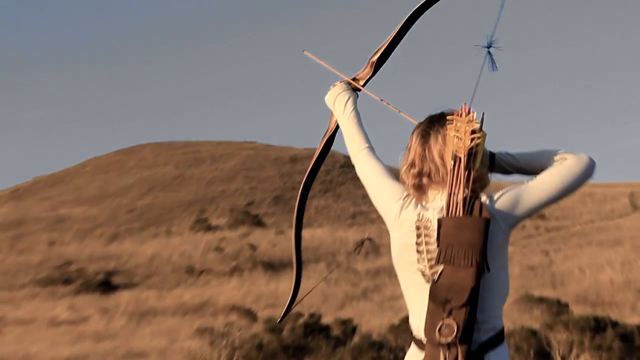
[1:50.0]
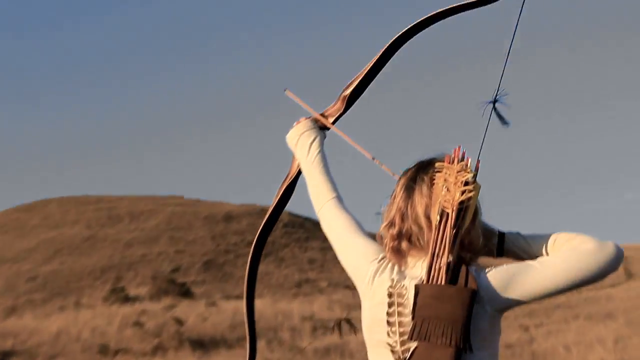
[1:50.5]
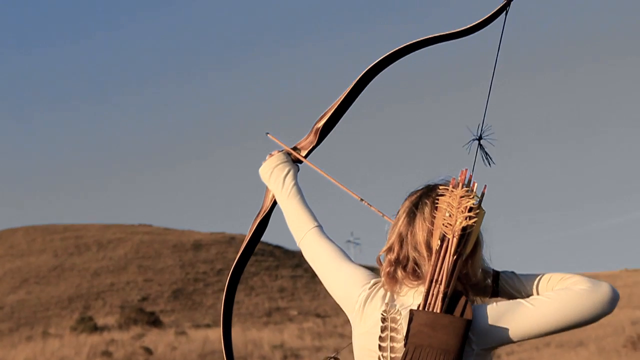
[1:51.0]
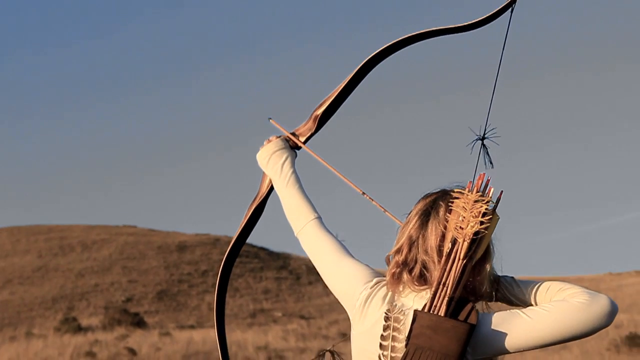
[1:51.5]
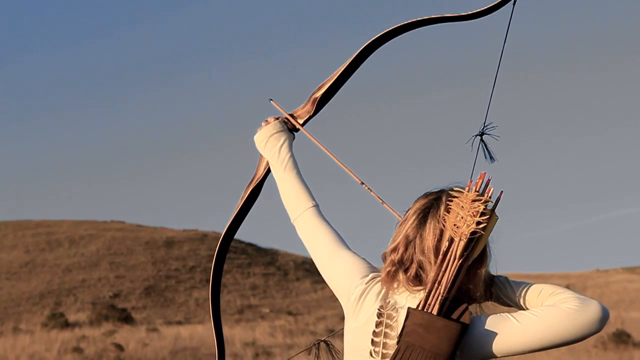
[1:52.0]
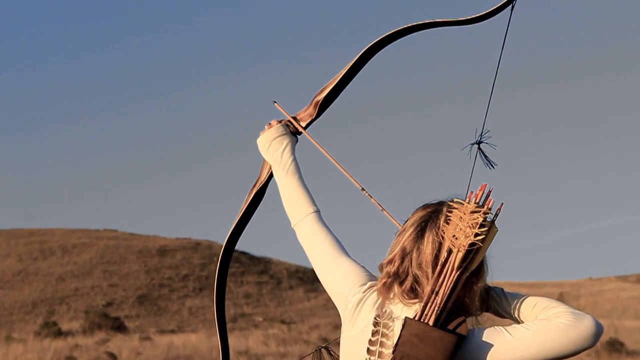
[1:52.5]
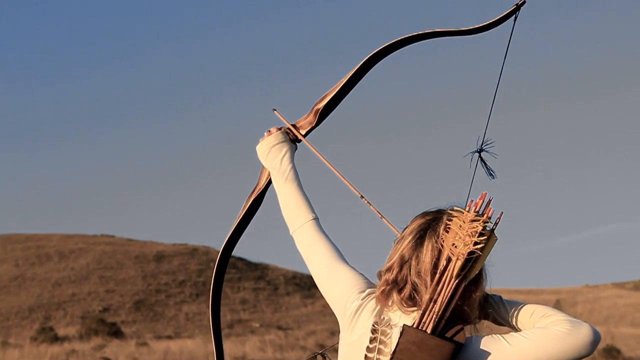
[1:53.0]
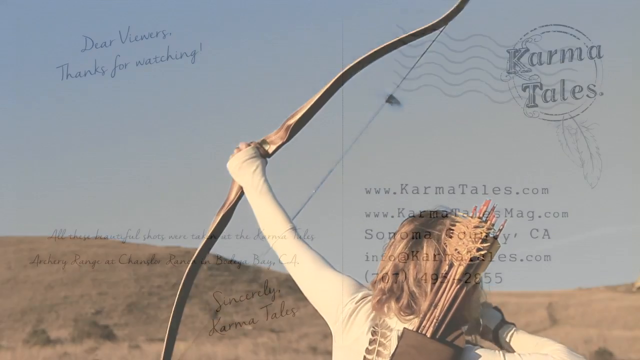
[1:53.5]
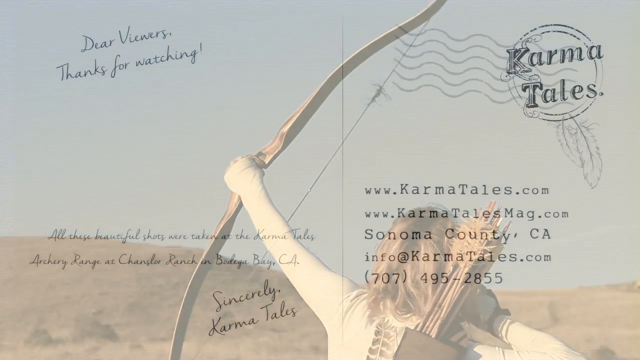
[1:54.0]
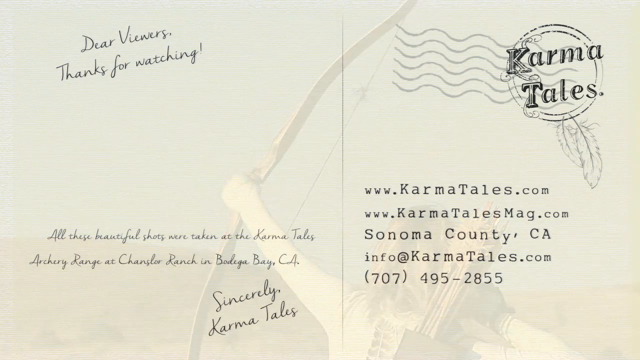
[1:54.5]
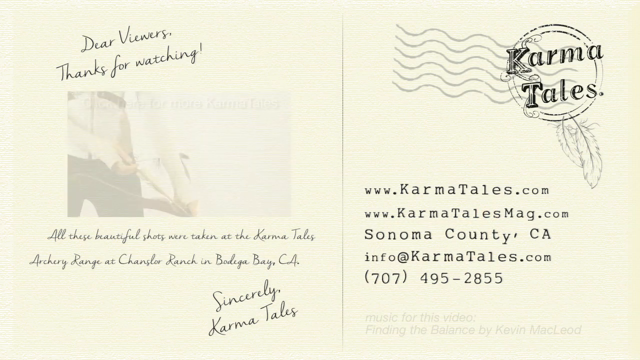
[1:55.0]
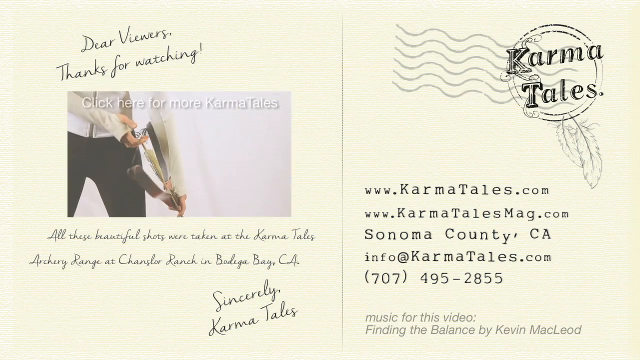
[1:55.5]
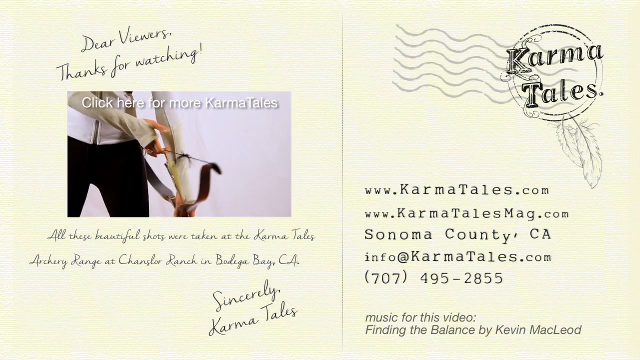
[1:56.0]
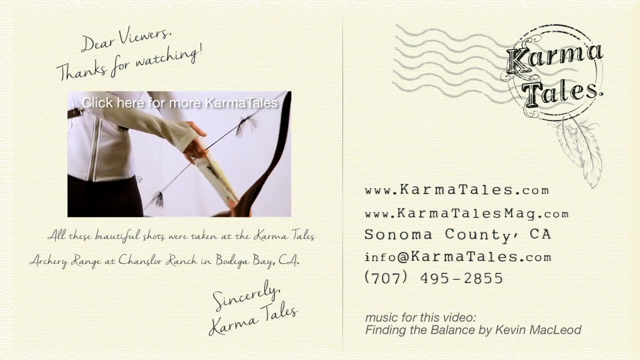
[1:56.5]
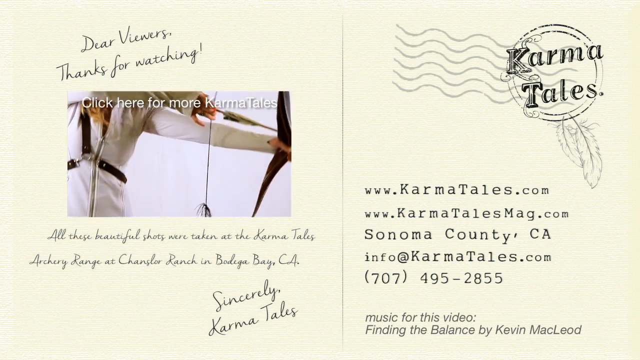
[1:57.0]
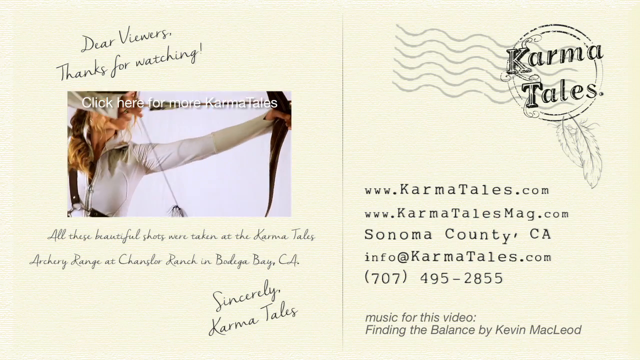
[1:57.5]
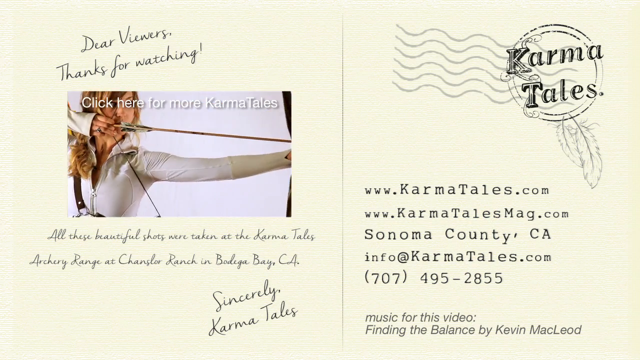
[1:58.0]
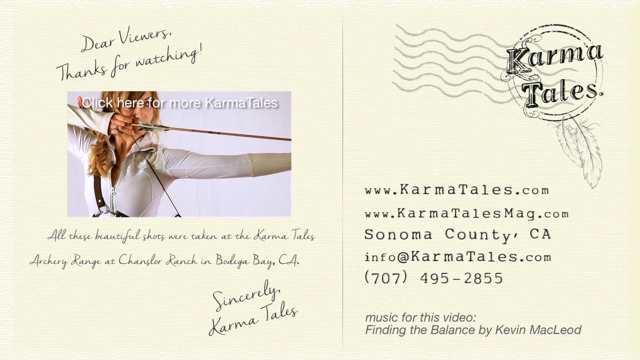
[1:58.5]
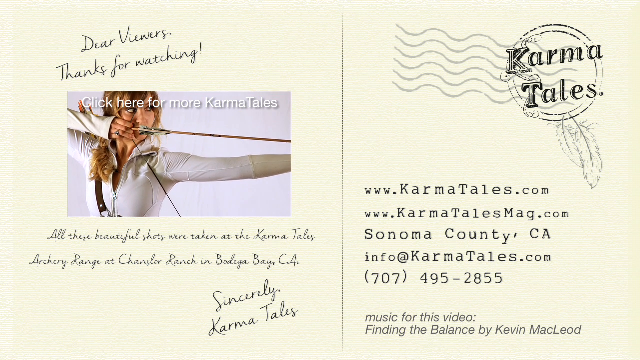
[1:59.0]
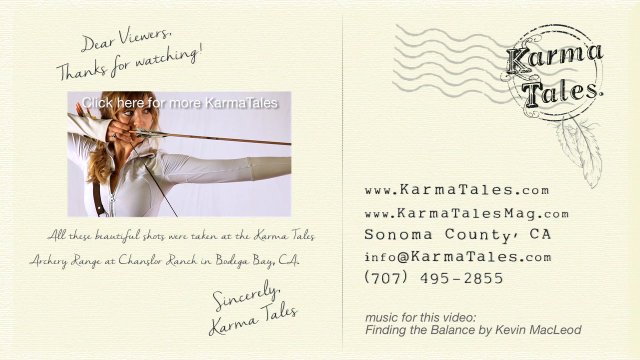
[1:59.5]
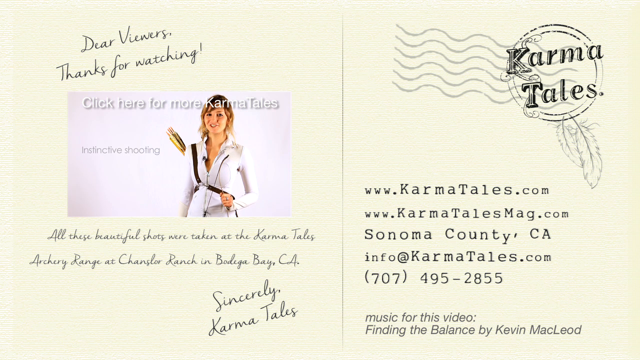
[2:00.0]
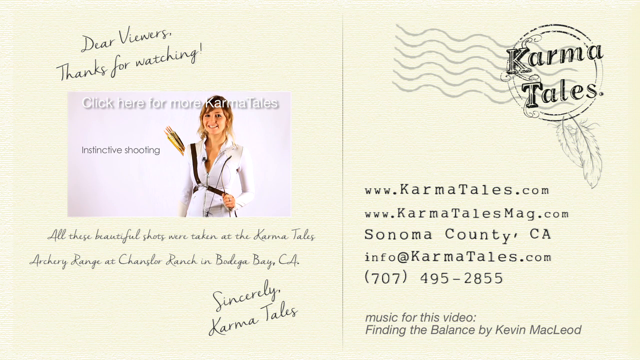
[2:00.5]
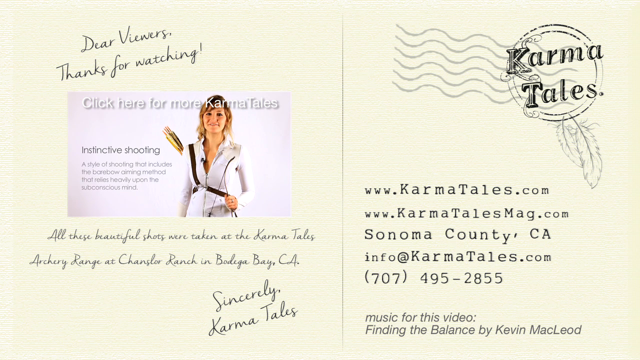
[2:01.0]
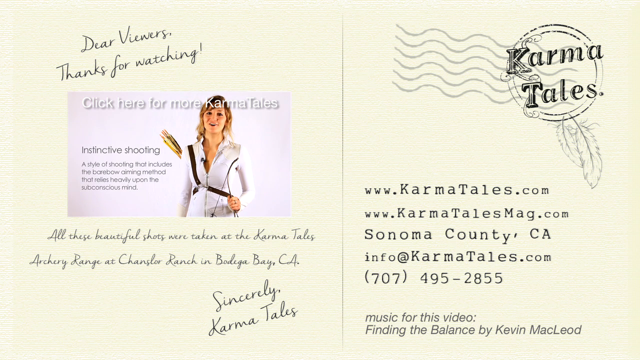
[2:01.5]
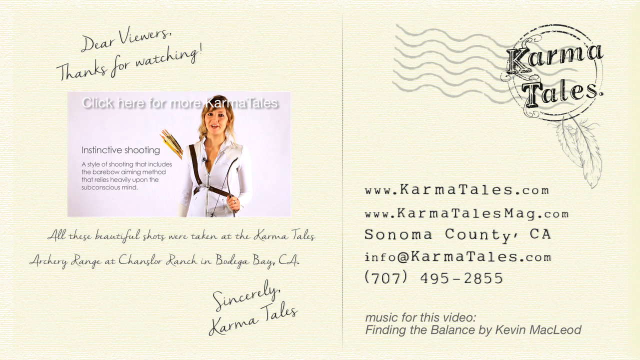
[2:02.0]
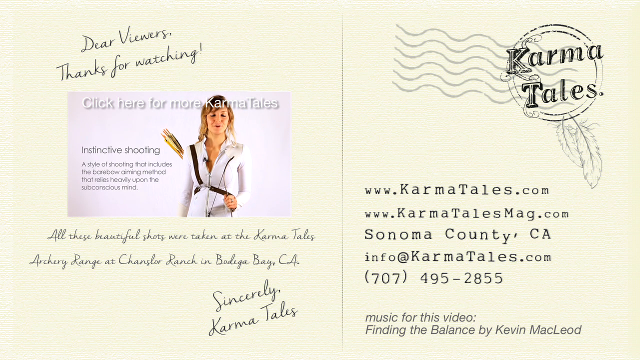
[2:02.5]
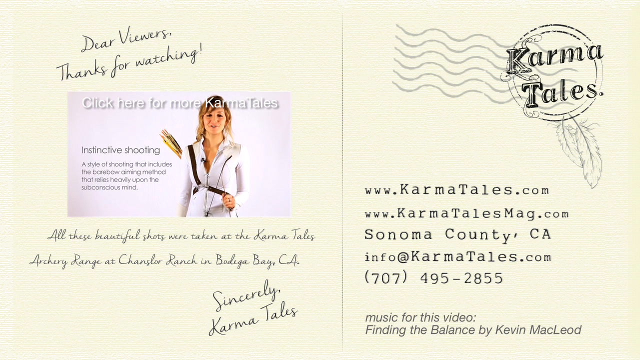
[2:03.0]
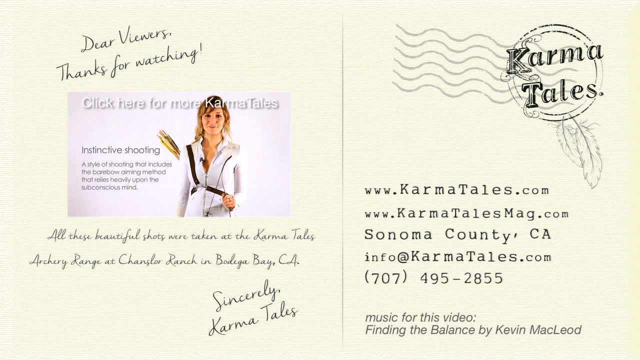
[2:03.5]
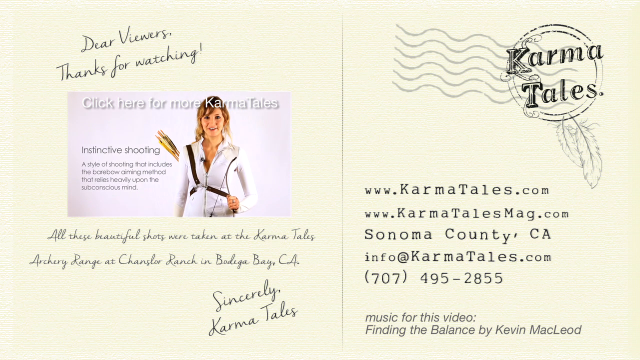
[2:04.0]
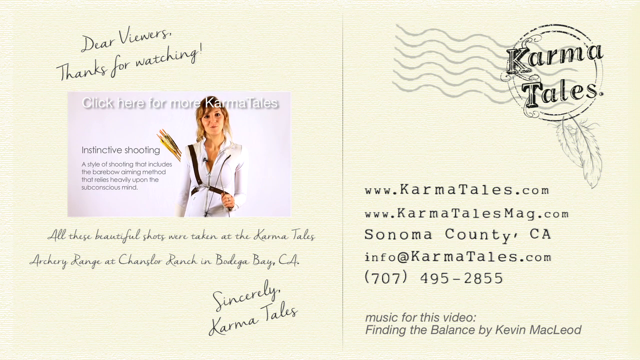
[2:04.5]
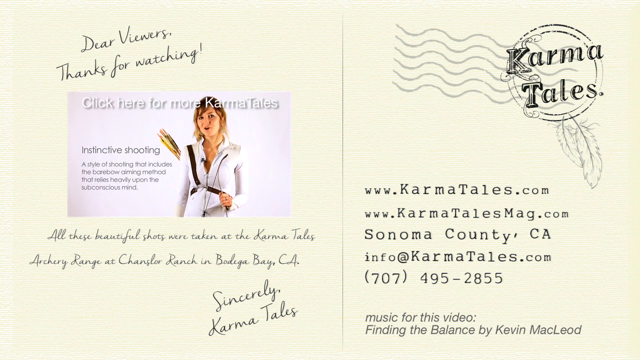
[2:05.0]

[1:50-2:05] A girl wearing mostly white, with shoulder-length blonde hair, points a bow and arrow up toward the sky and releases it. The video fades out to what looks like a postcard. In the top corner it says "Karma Tales" with some circles around it and some squiggly lines with a feather or two hanging out of it. In the top left corner is the text "thanks for watching." Text in the bottom left corner says "all these beautiful shots were taken at the Karma Tales. It was in California, Sincerely, Karma Tales." In the bottom right corner are "www.karmatales.com," "www.karmatalesmag.com," "Sonoma County, California," "info at karmatales.com" and "707-495-2855." A video pops up playing, showing the same girl shooting the bow and arrow, with text that says "click here for more Karma Tales" and more text that says "instinctive shooting."